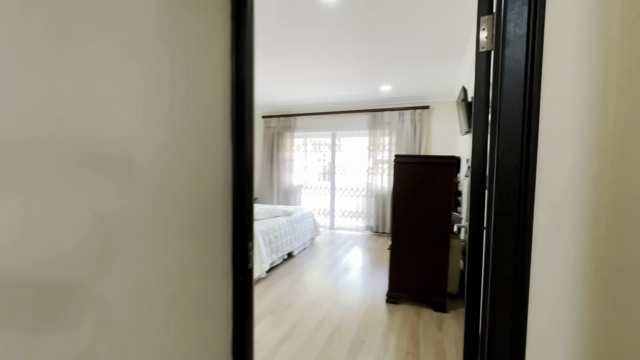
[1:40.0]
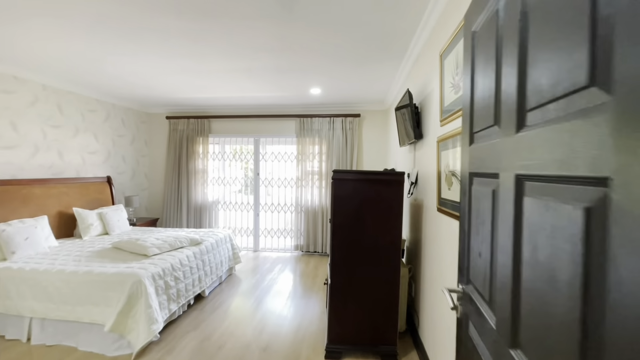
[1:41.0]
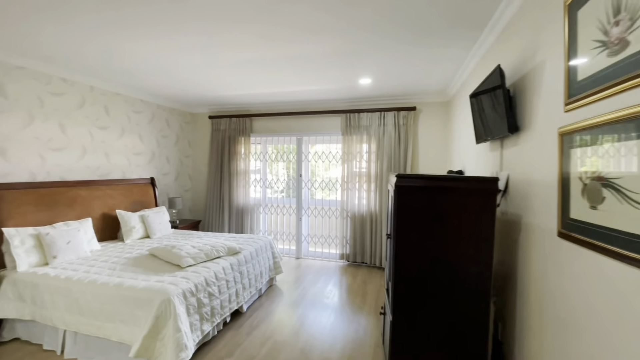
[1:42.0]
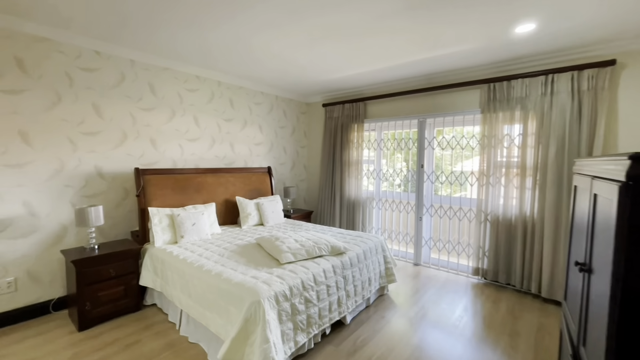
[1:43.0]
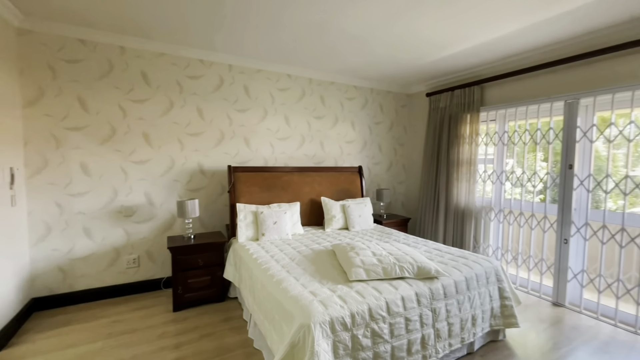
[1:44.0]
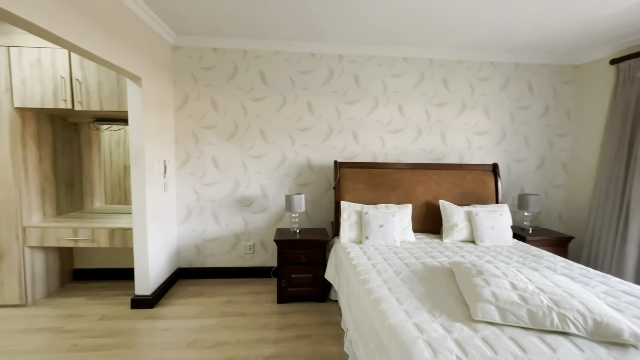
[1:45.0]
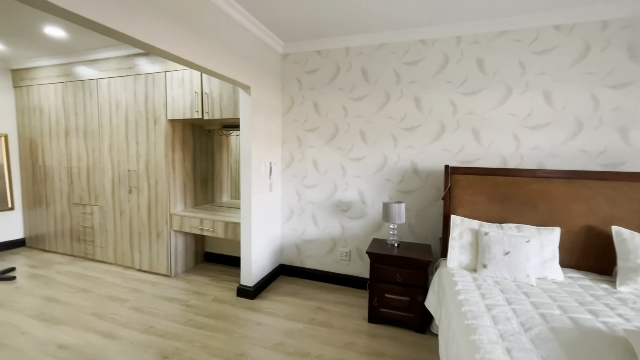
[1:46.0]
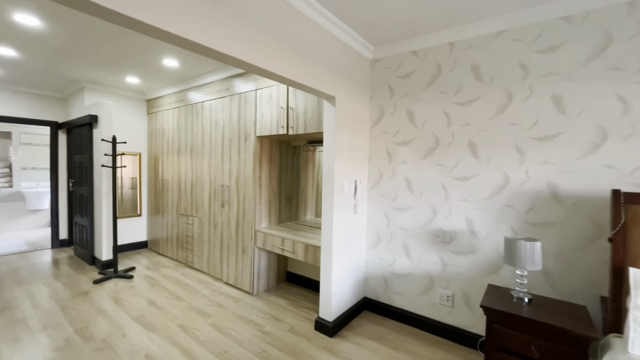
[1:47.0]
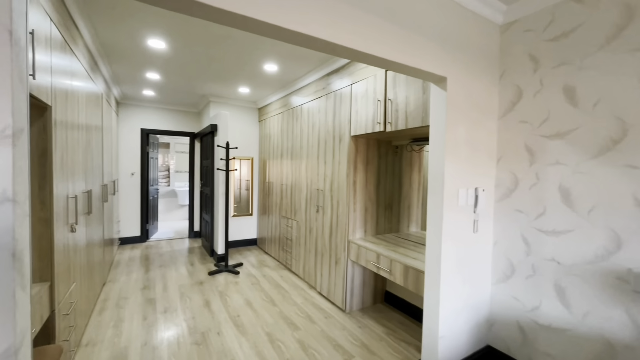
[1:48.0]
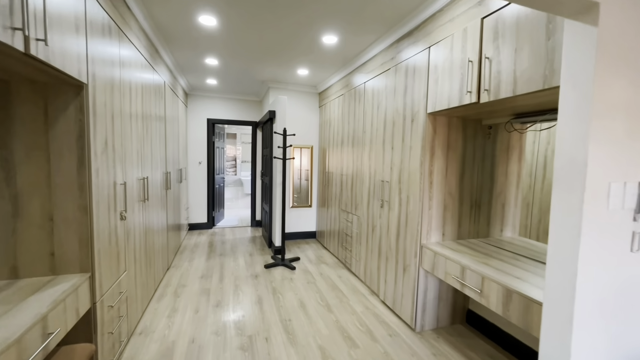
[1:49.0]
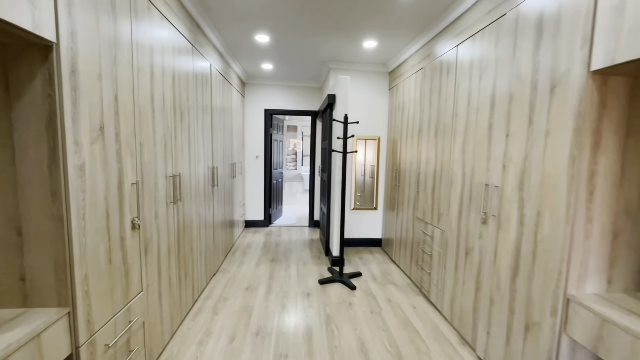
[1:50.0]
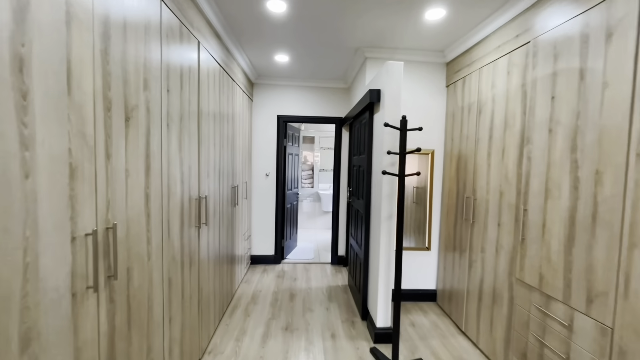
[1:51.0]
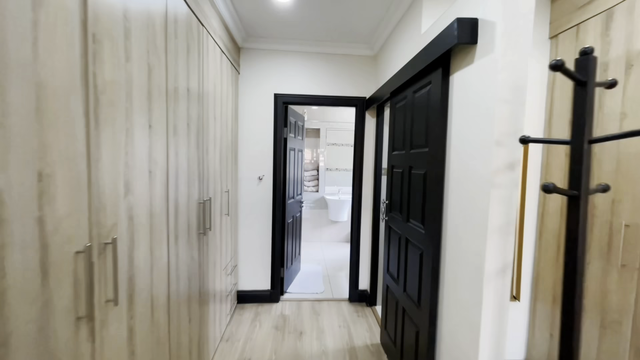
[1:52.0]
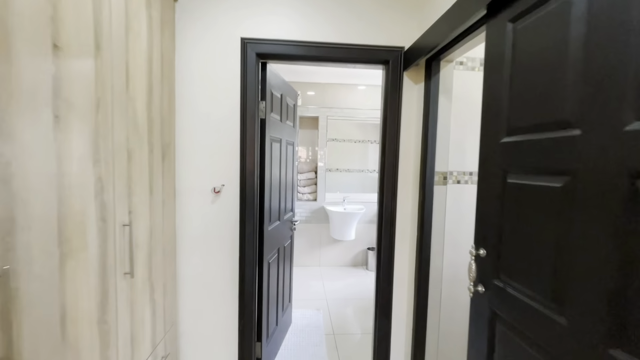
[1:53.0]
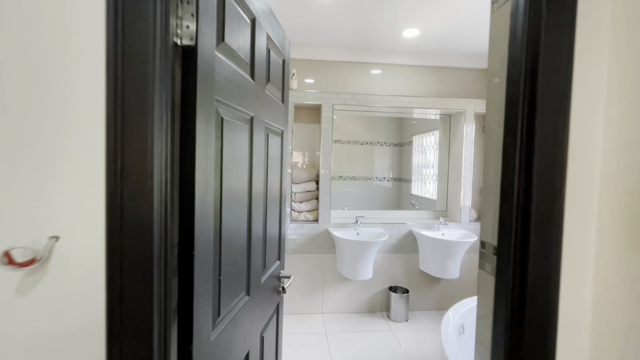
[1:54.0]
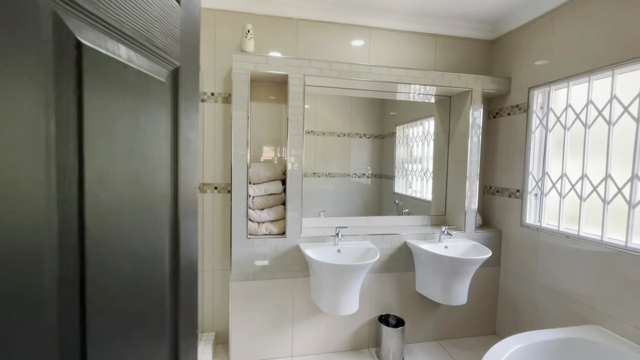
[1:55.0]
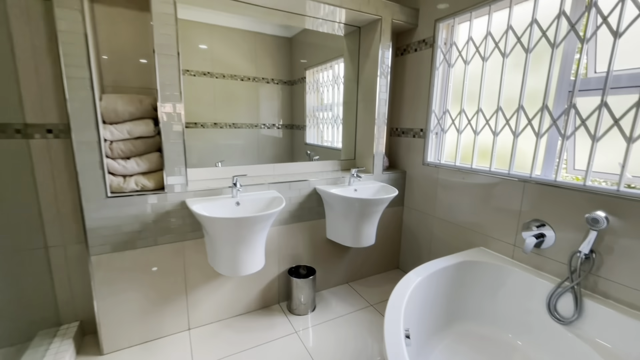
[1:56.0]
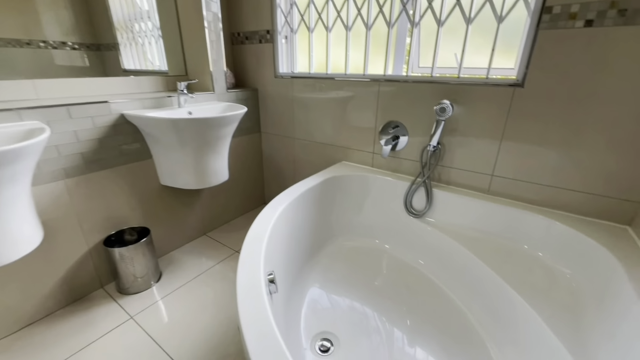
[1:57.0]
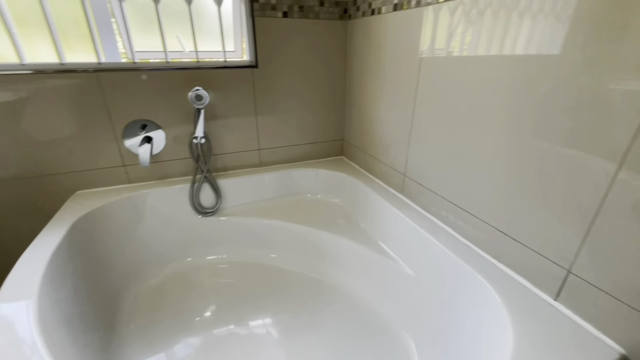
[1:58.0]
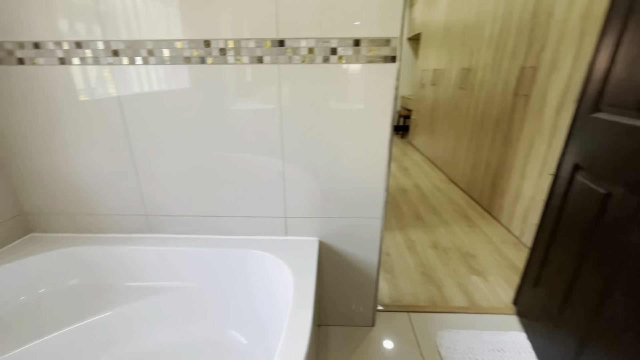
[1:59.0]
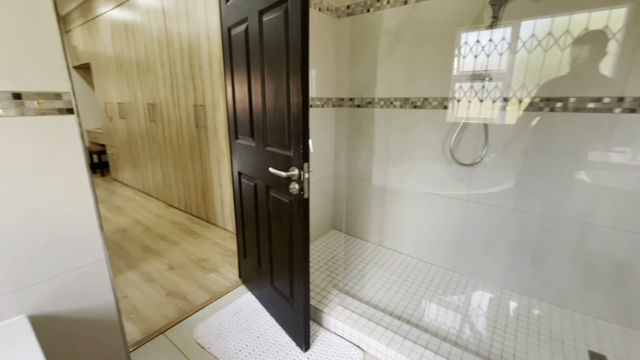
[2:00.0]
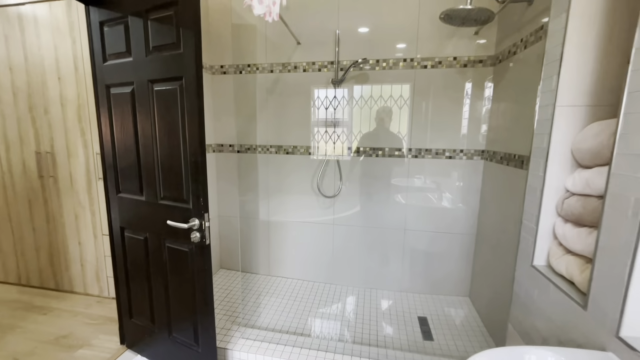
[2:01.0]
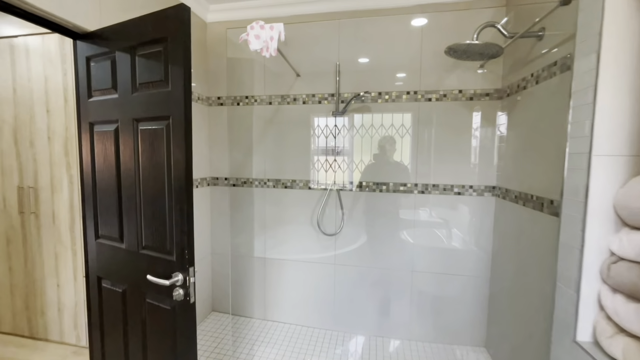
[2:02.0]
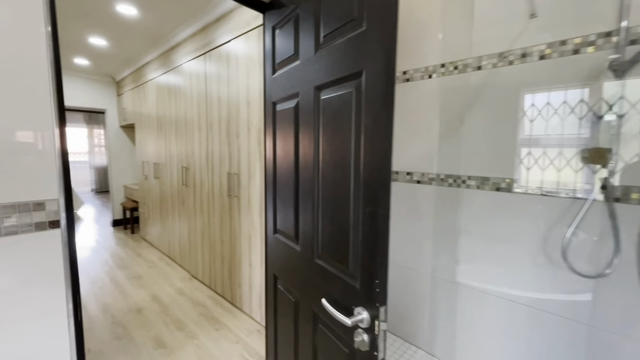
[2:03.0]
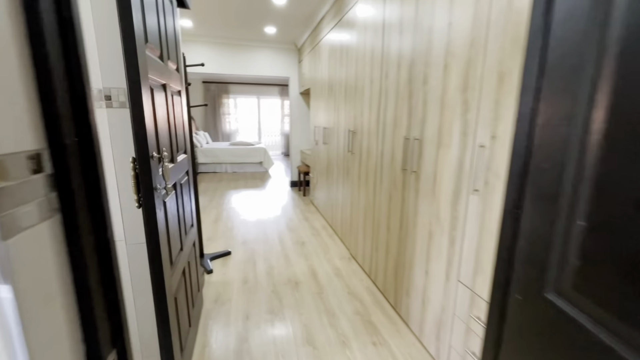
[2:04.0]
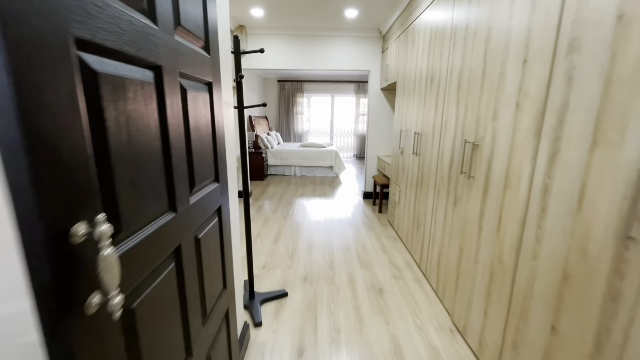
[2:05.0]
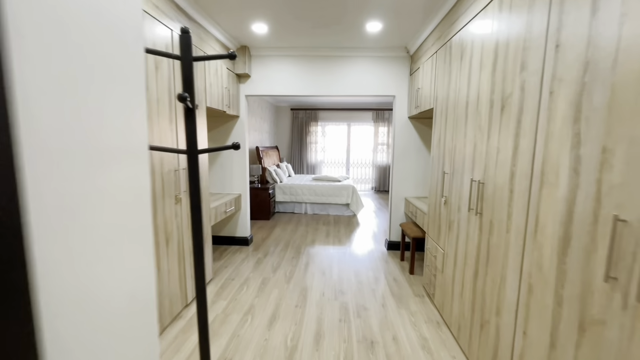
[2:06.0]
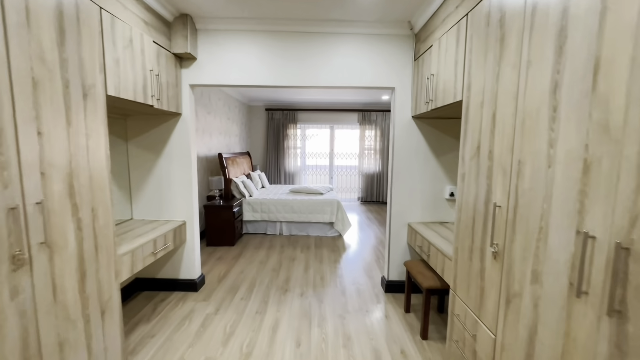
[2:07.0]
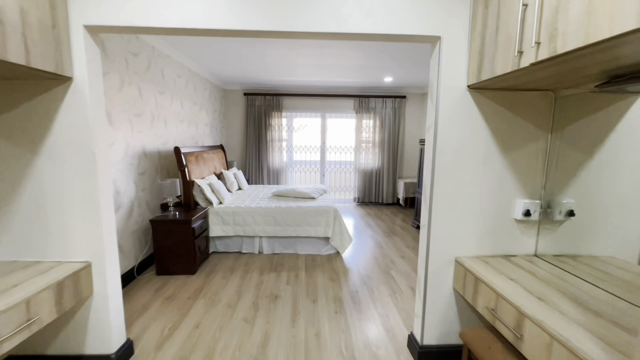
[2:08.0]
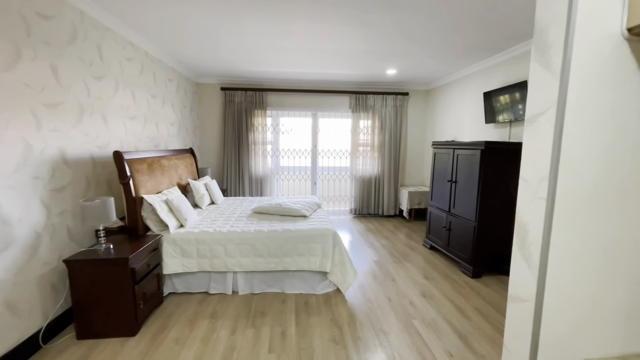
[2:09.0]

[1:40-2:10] The camera goes into a room with a couple's bed that has a full white duvet and a set of four white pillows; the bed is brown, with two brown bedside tables. The wallpaper is fully white, and there is a big opening that is closed at the moment but looks like it opens to a balcony. Next is what looks to be the closet area, a spacious little square room with the left and right sides covered in furniture that opens. There also seems to be a kind of black pole with little holes coming out of it for hanging coats. Further along the hallway is a bathroom with what seems like a kind of jacuzzi-style bathtub with a little showerhead near it, all in beige tiles with an accent of stone-coloured strips going around two of them.